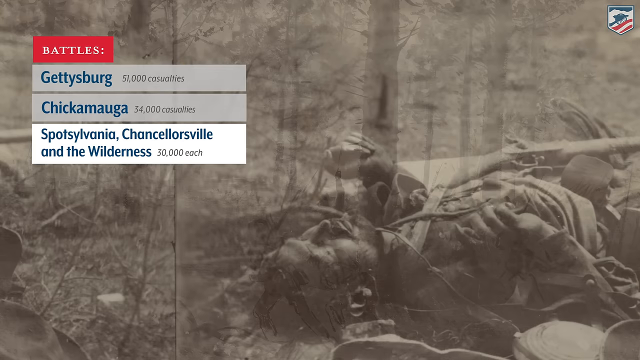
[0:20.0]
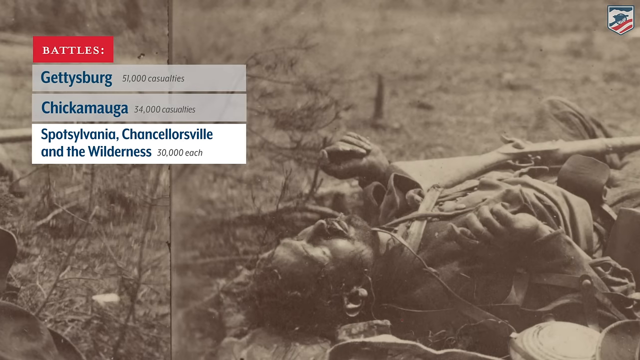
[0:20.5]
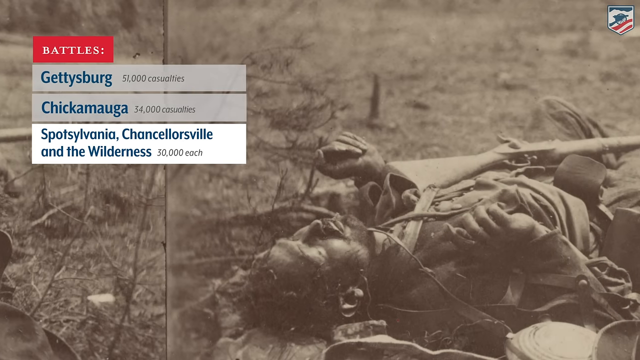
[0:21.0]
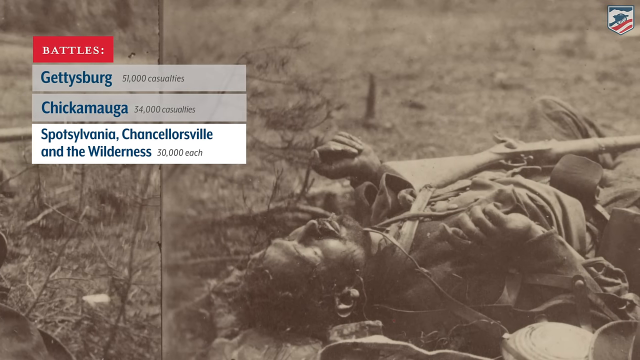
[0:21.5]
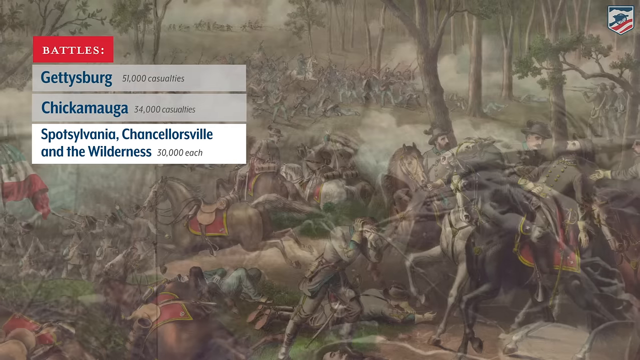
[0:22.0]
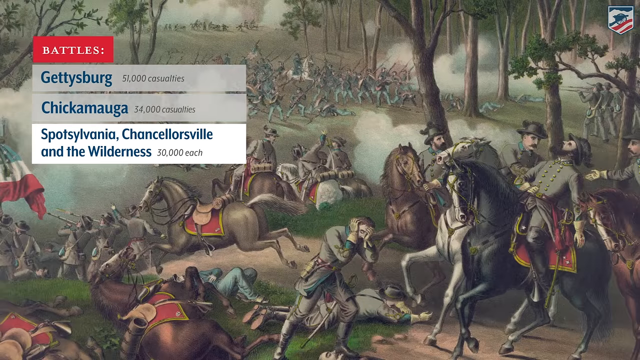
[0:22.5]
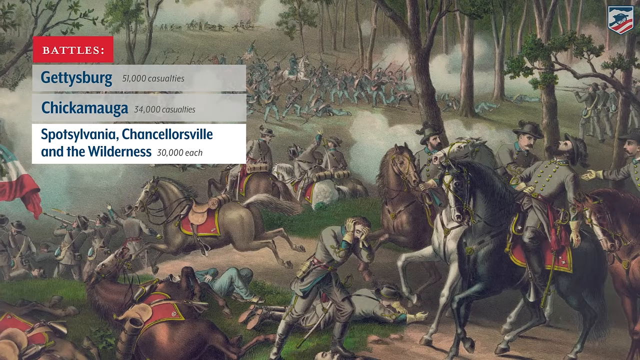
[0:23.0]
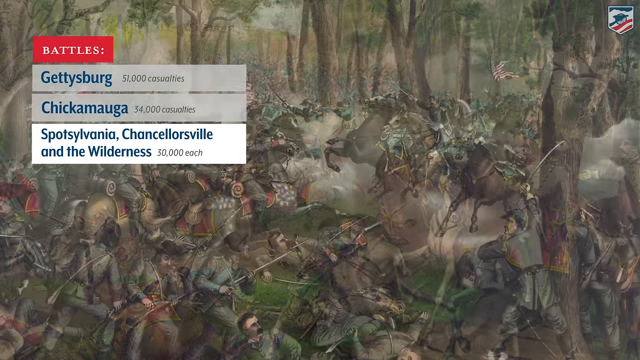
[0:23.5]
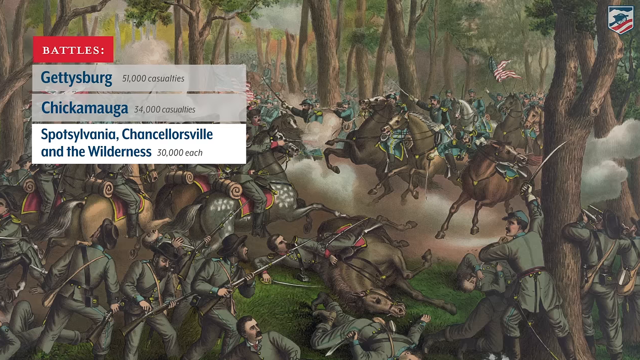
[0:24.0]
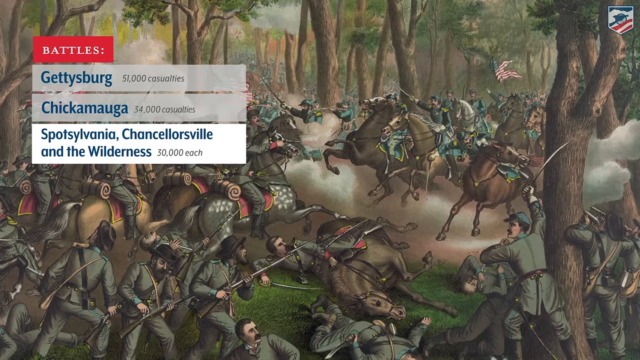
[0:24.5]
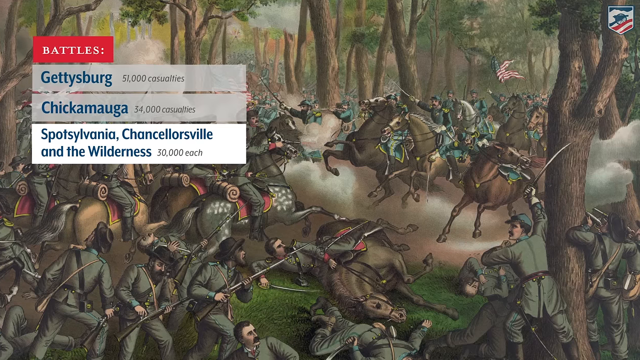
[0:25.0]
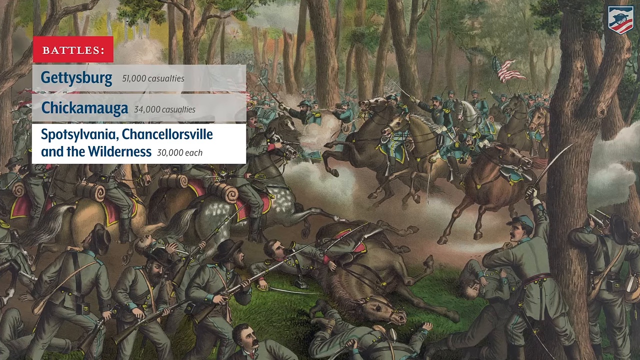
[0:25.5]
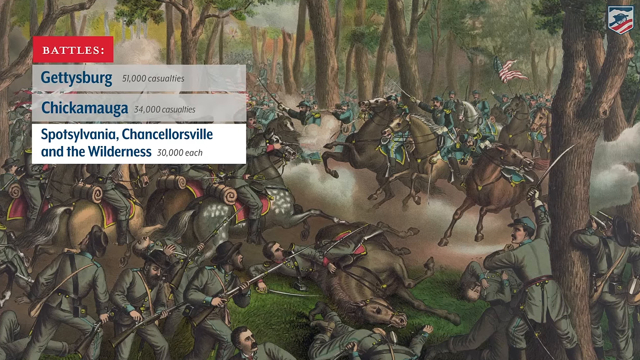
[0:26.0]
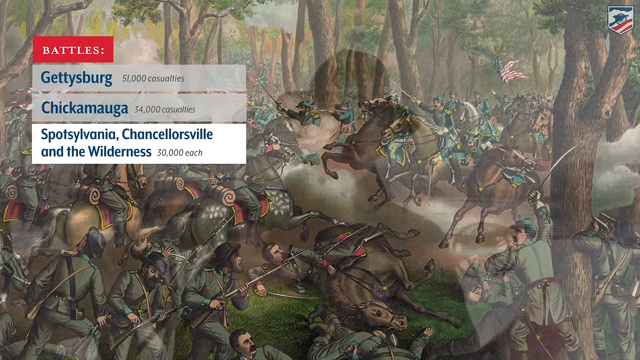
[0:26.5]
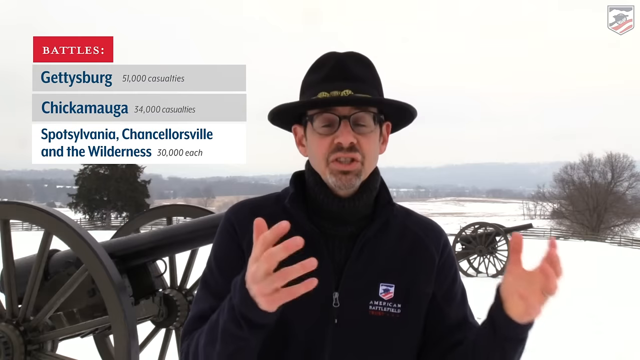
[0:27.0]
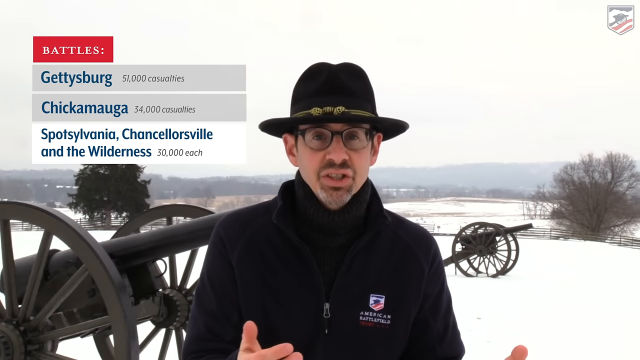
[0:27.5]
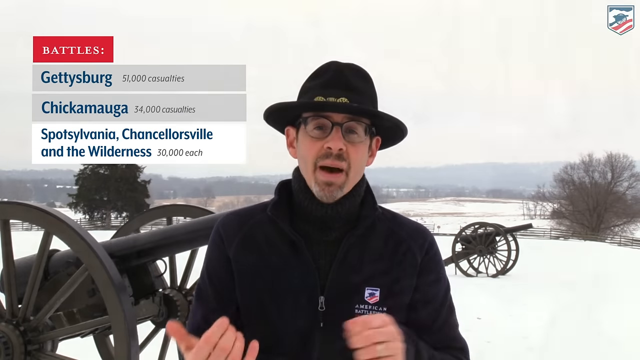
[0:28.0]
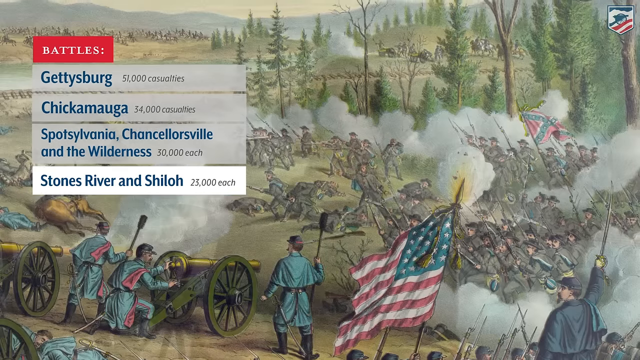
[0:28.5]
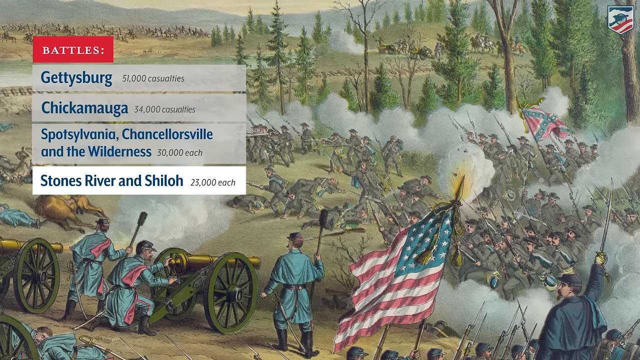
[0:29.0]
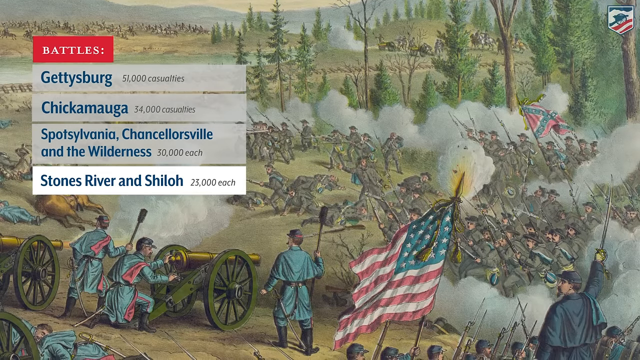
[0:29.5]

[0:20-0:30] What looks like a presentation is shown, possibly part of a PowerPoint or a video with an overlay. At the start, a picture of a soldier is in the background, possibly a real picture of someone who died on the battlefield or possibly a computer illustration. Text reads "battles," followed by "Gettysburg" with casualties of 51,000, "Chickamauga" with 34,000, and "Spotsylvania," "Chancellorsville" and "the wilderness" with 30,000 each. Then various paintings of these battles are shown; they seem not to be hand drawn but possibly a combination involving paint, and the art is detailed.